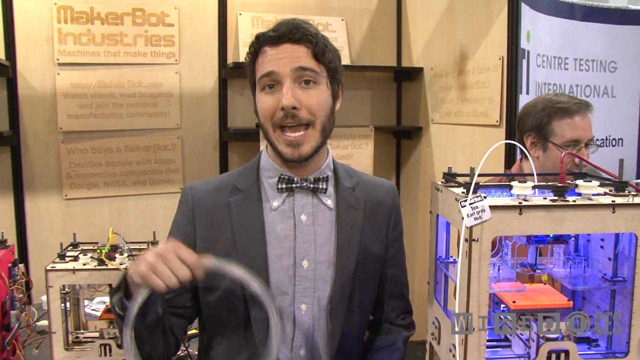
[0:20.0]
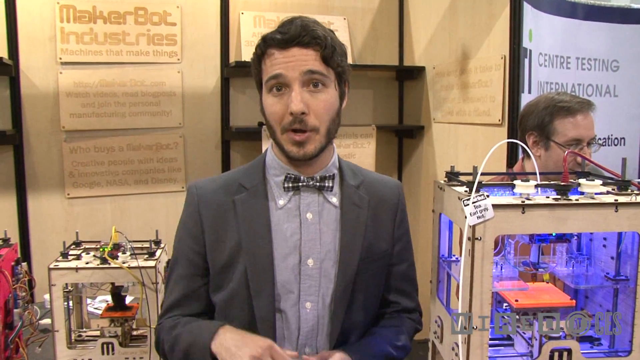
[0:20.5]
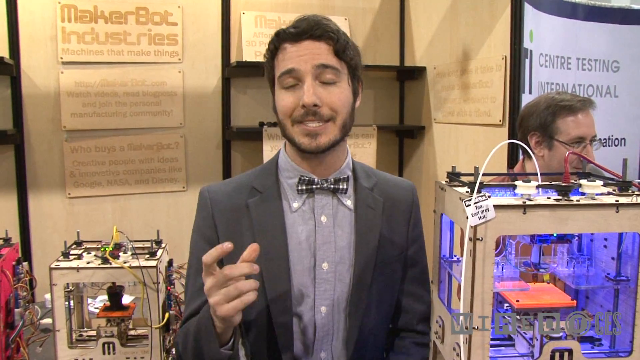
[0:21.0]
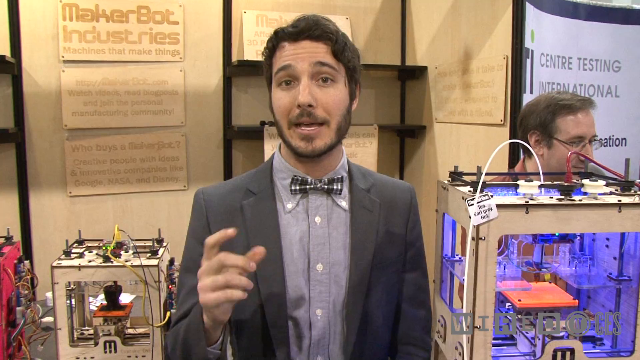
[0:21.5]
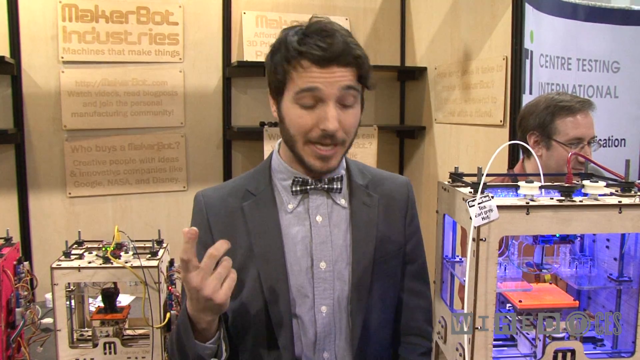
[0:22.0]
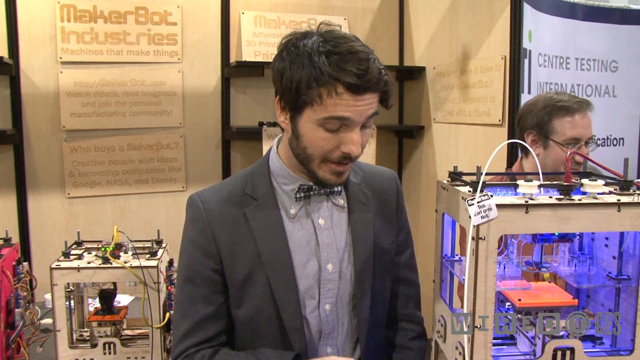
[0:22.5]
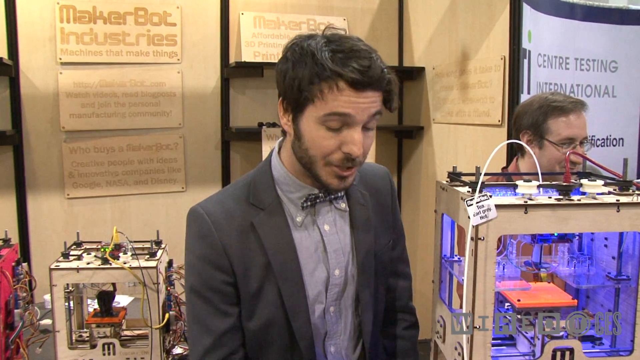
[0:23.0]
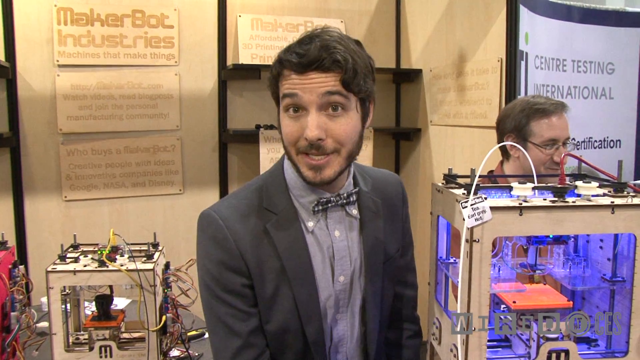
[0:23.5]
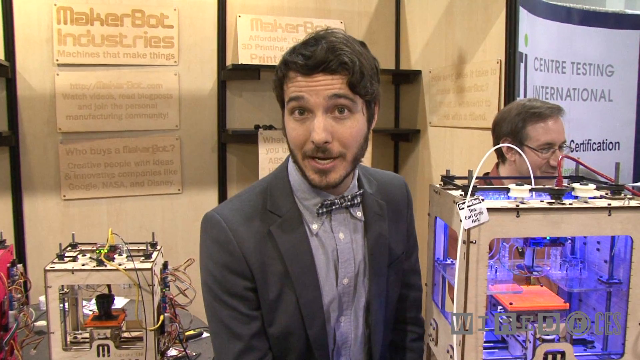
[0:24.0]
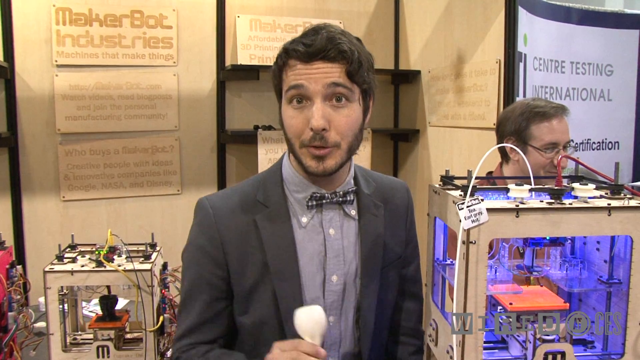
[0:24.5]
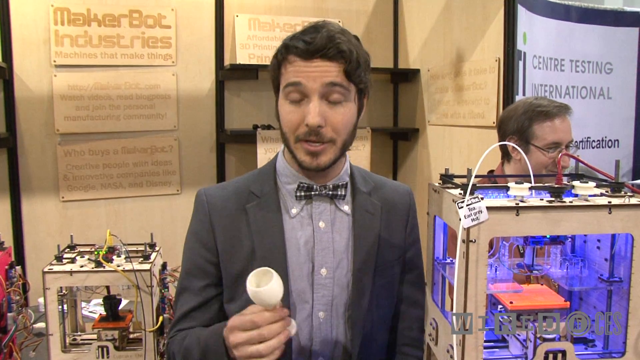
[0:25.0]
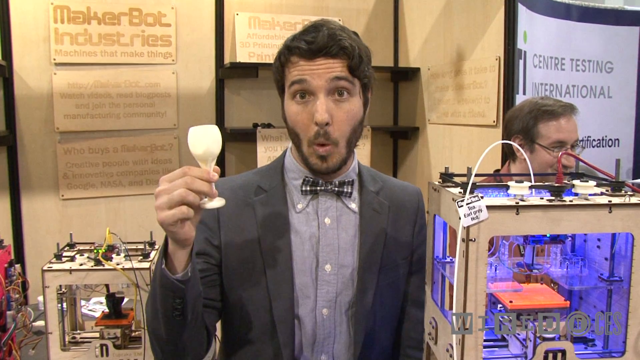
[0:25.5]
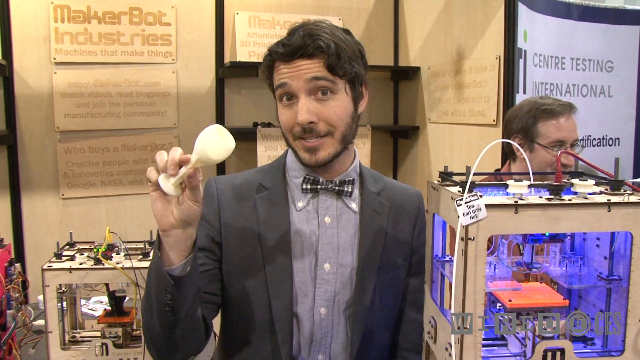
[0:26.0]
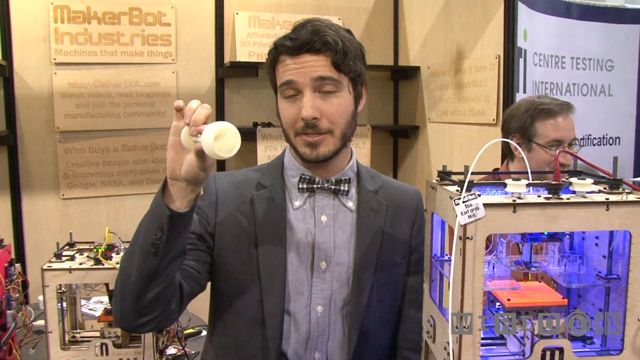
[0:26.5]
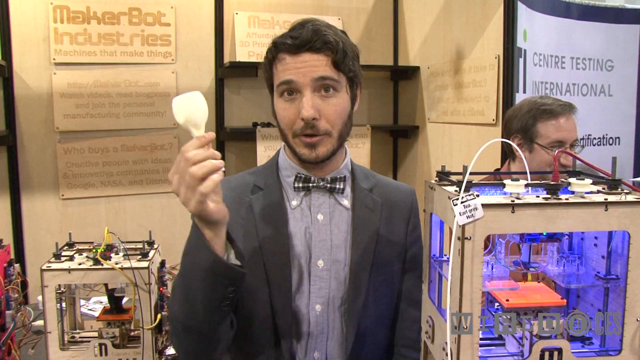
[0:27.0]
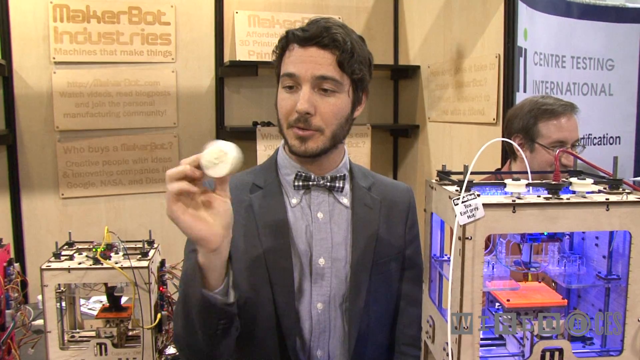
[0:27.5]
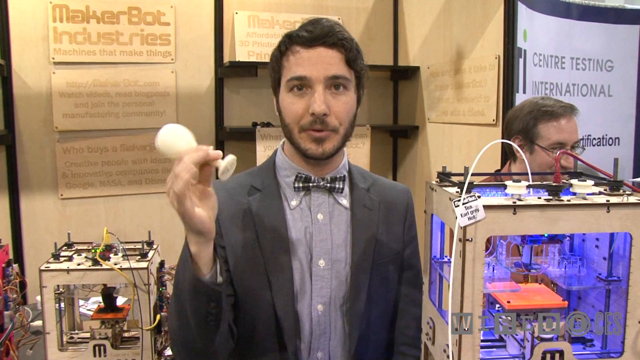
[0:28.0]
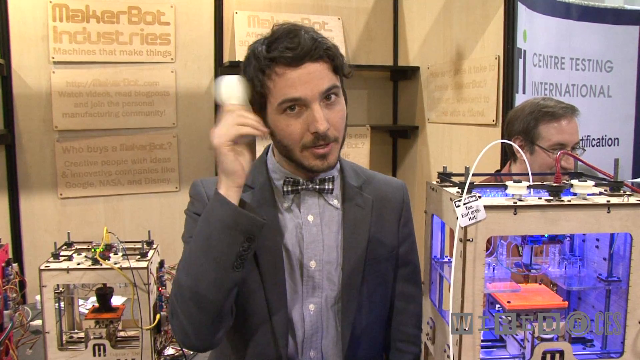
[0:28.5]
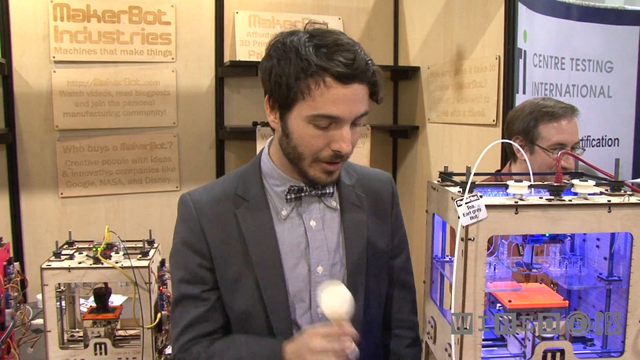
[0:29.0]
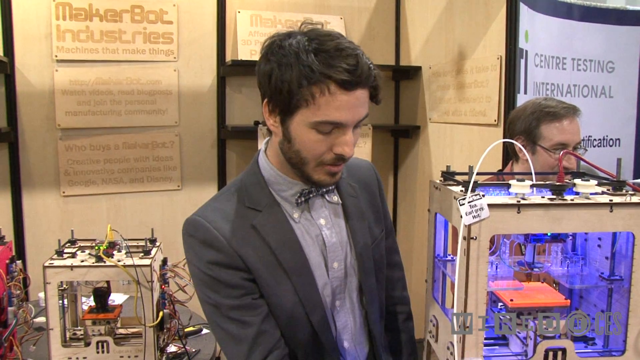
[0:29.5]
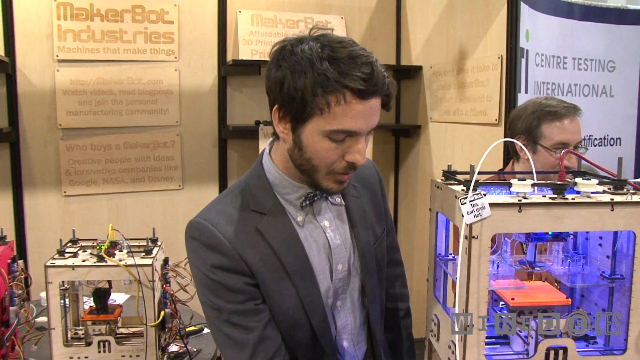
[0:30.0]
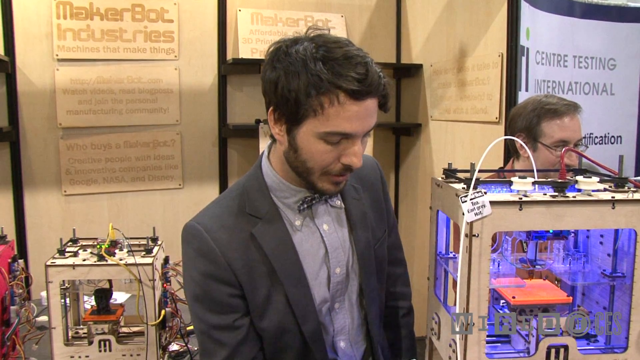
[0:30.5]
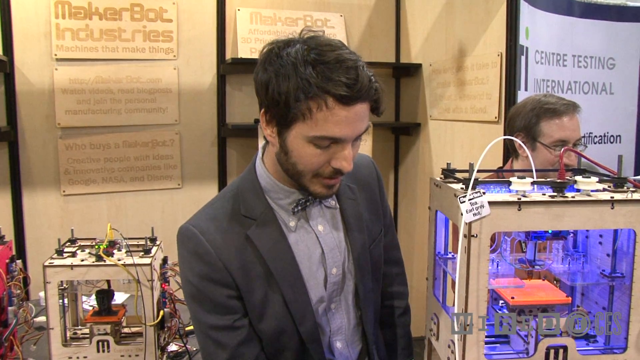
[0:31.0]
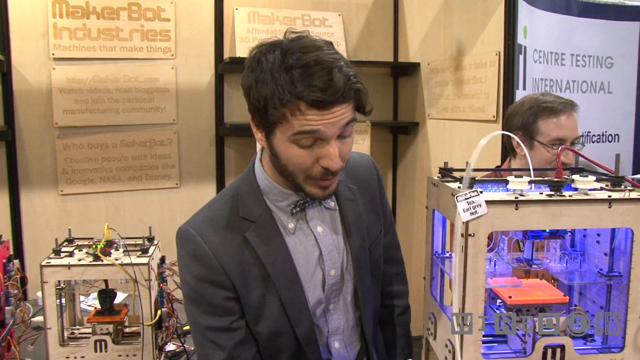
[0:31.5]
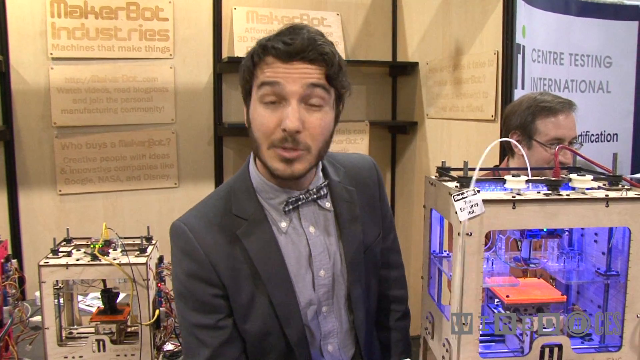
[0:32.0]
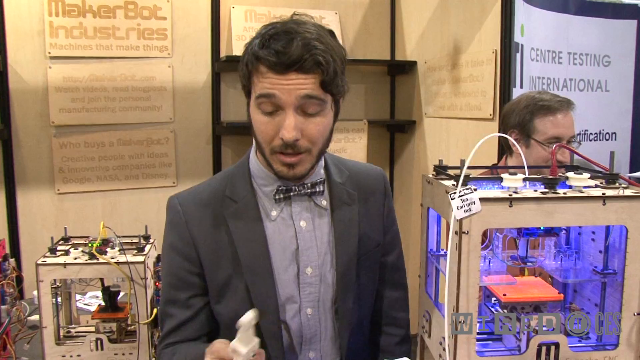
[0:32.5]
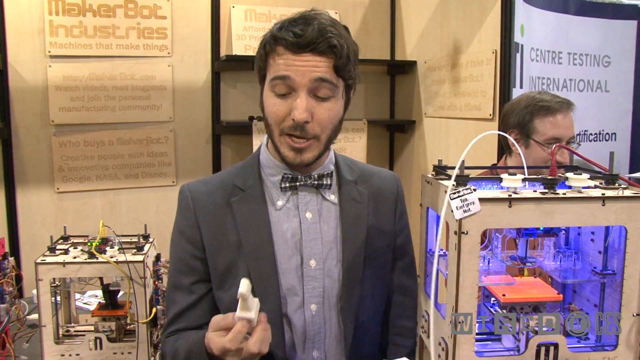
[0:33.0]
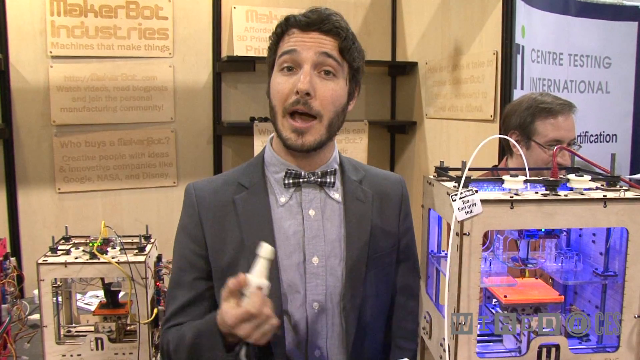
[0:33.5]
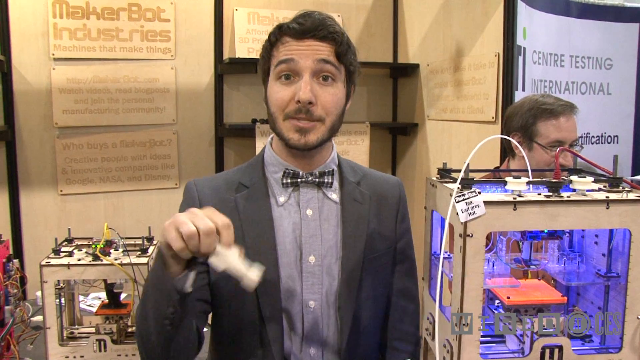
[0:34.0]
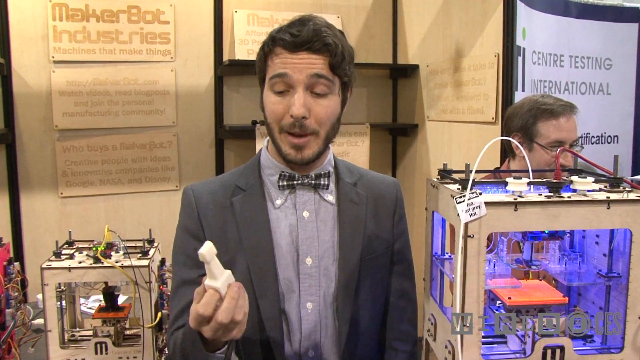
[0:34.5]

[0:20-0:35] The same man is now smiling and smirking a little, seemingly impressed by the things coming out of his machine, apparently a 3D printer. His hands are extended in an instructional style, as if explaining things. He stands right next to a machine with a little long tube coming out of it; there are two boxes on either side of him, apparently part of the 3D printer, full of wires in a very intricate arrangement, with a purple light inside. A man behind him walks casually. The presenter goes through the items one by one, pulling them out: one looks like a wine glass, and others are different shapes.